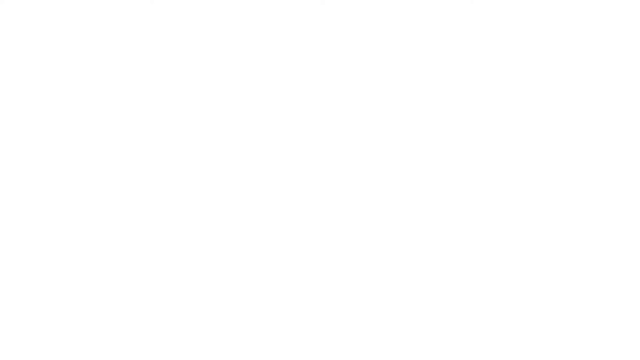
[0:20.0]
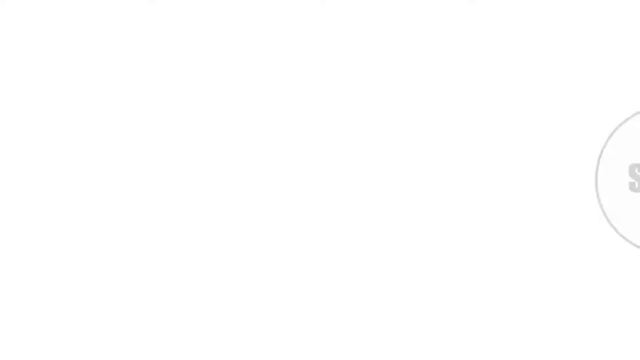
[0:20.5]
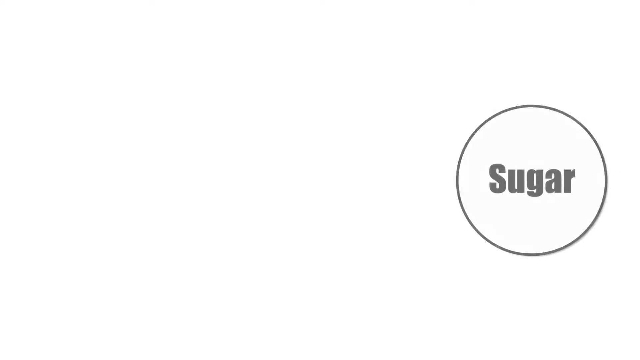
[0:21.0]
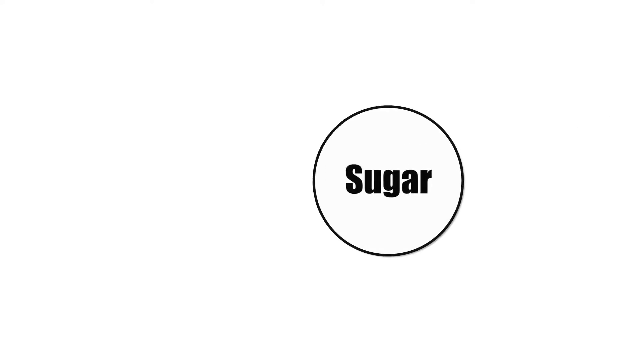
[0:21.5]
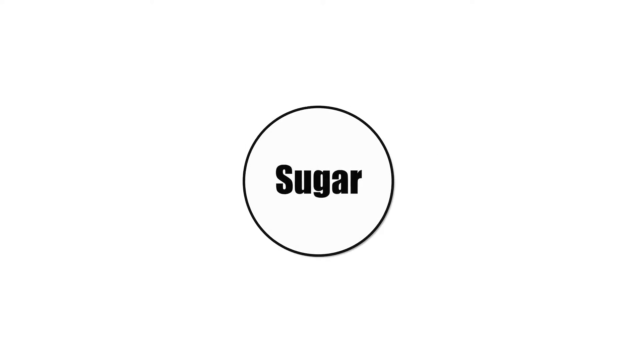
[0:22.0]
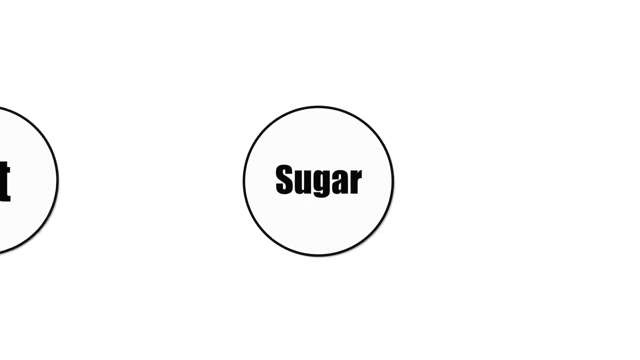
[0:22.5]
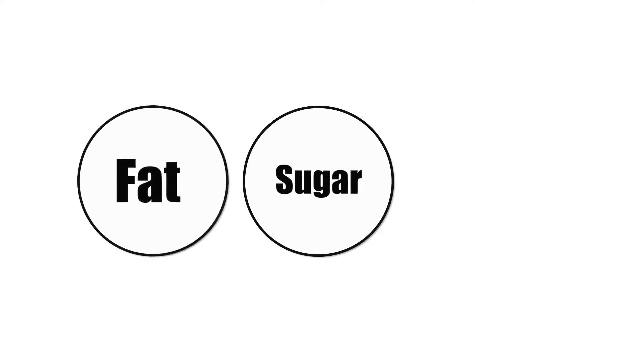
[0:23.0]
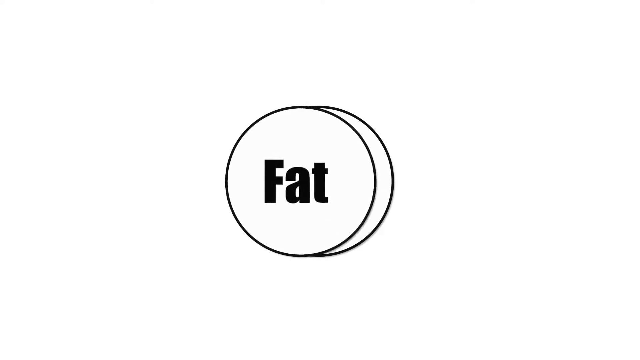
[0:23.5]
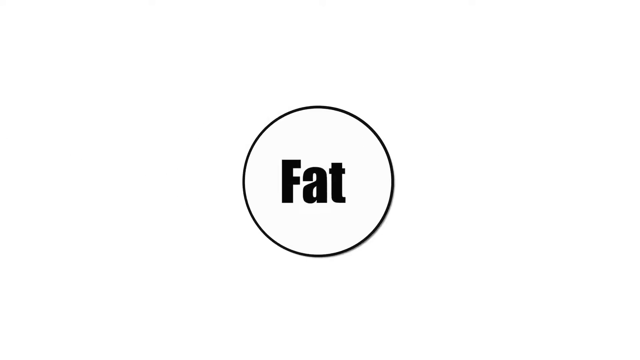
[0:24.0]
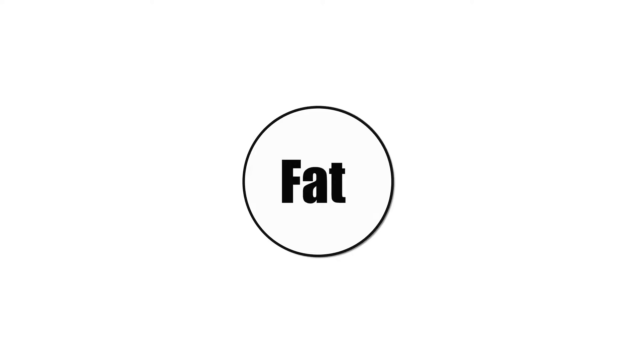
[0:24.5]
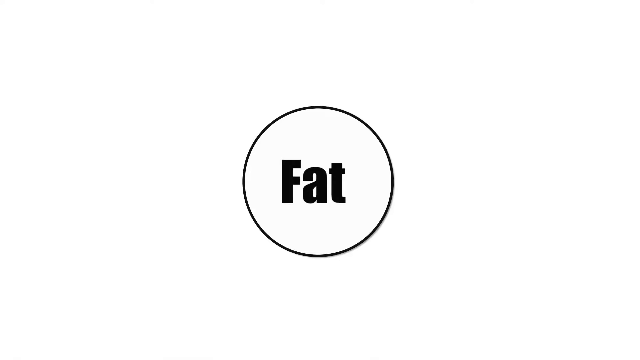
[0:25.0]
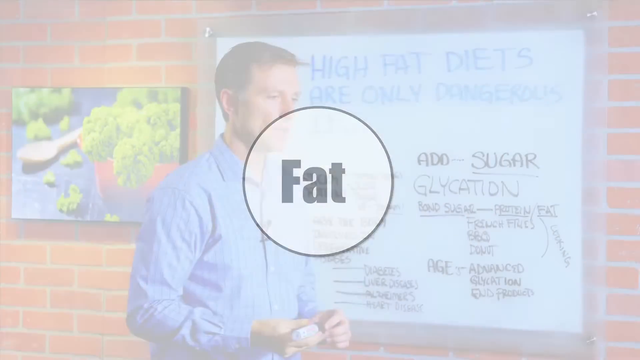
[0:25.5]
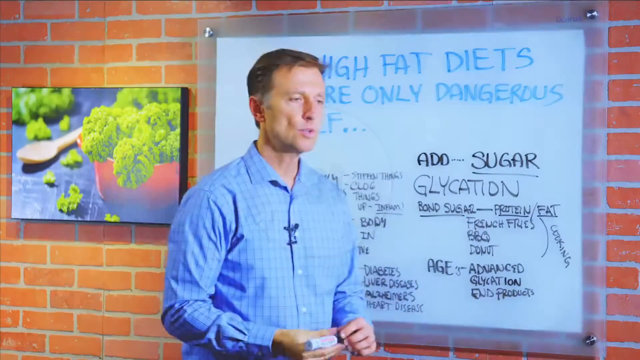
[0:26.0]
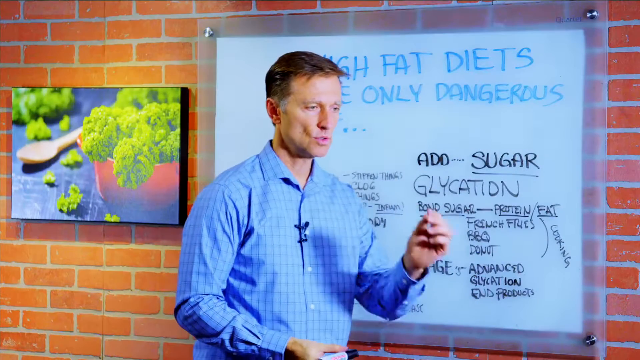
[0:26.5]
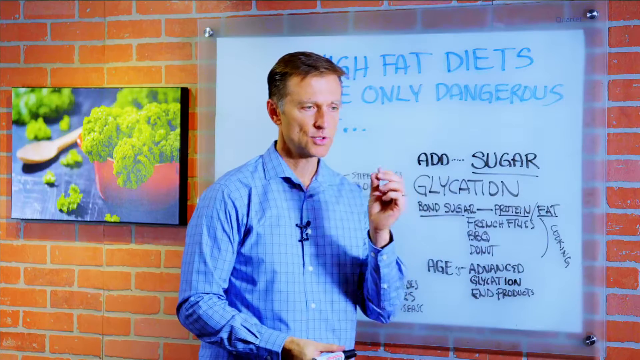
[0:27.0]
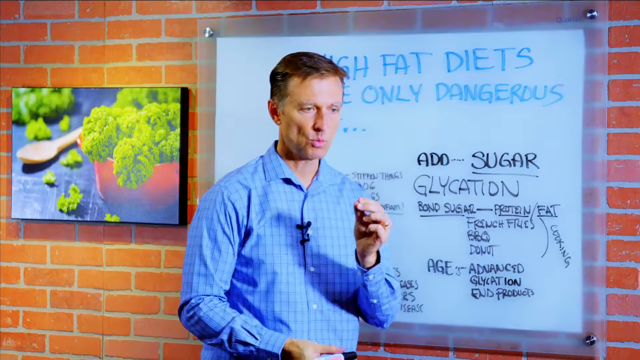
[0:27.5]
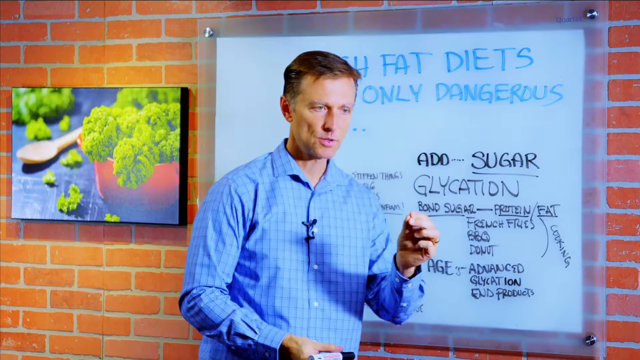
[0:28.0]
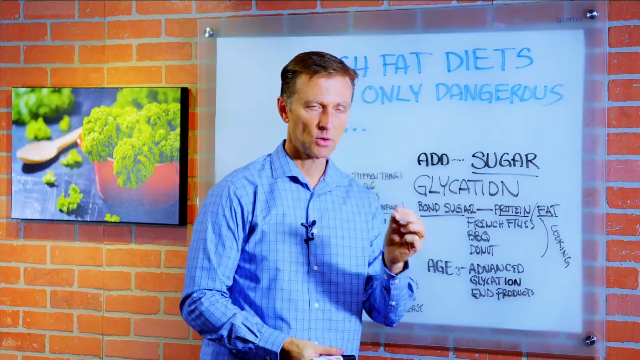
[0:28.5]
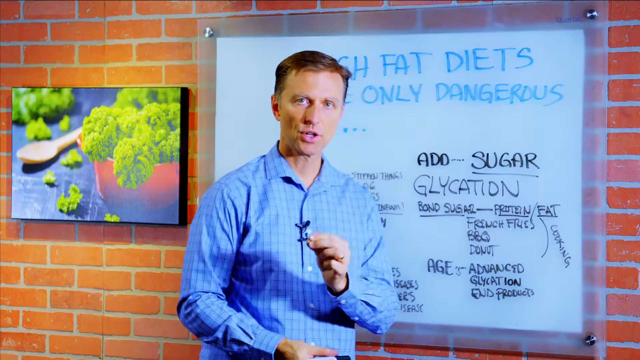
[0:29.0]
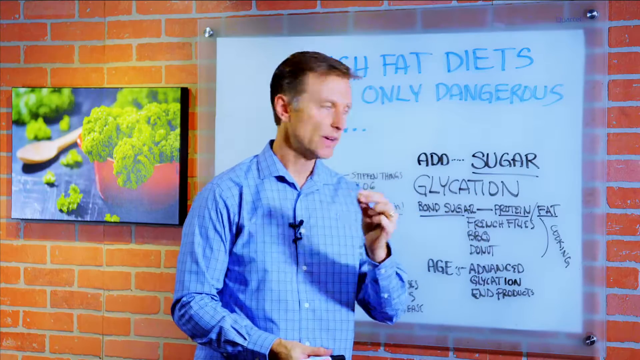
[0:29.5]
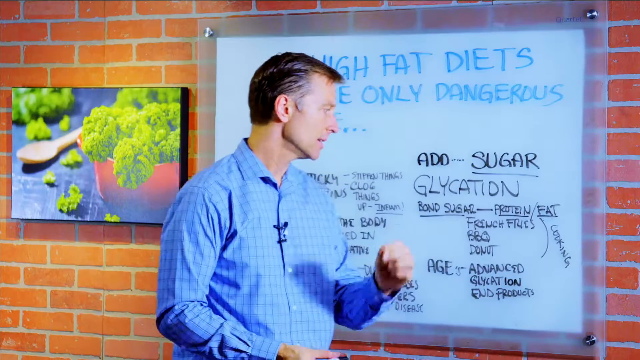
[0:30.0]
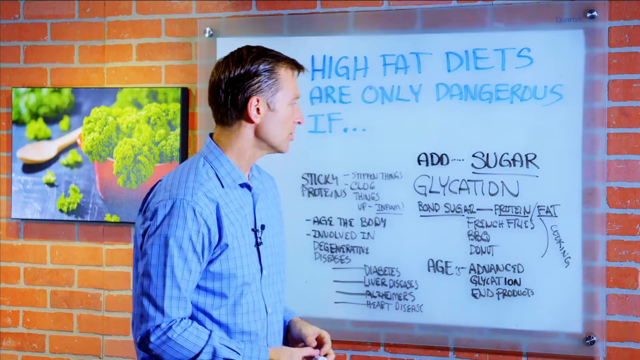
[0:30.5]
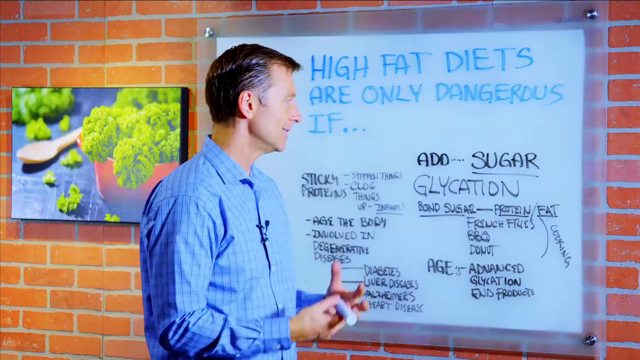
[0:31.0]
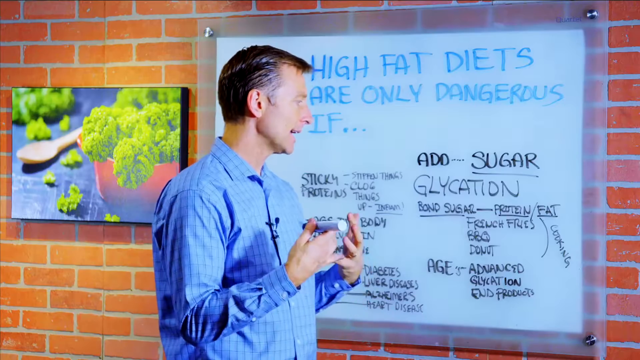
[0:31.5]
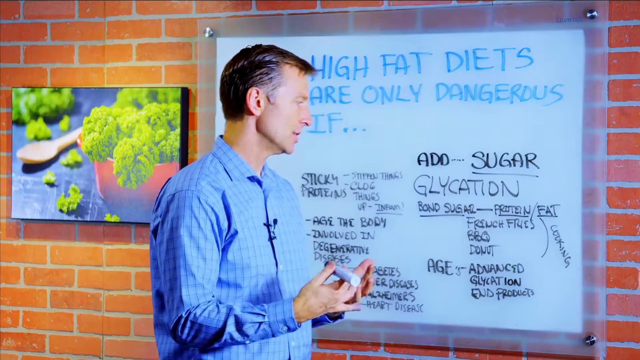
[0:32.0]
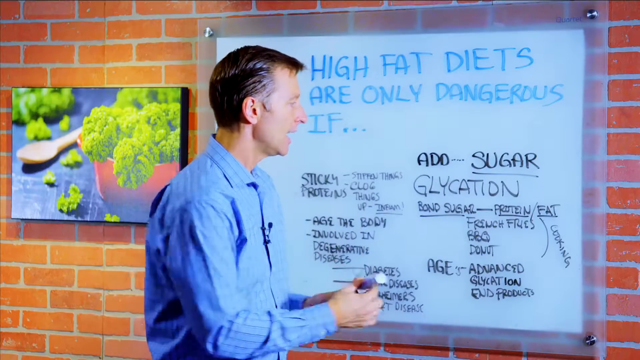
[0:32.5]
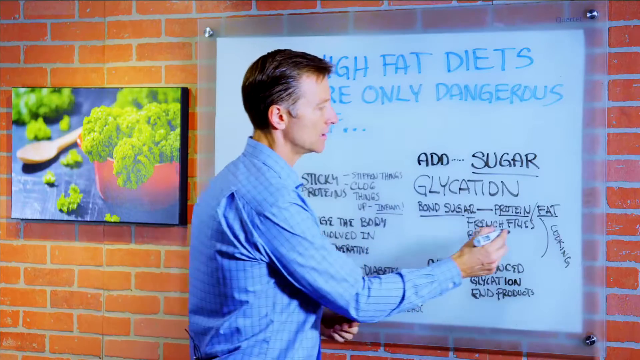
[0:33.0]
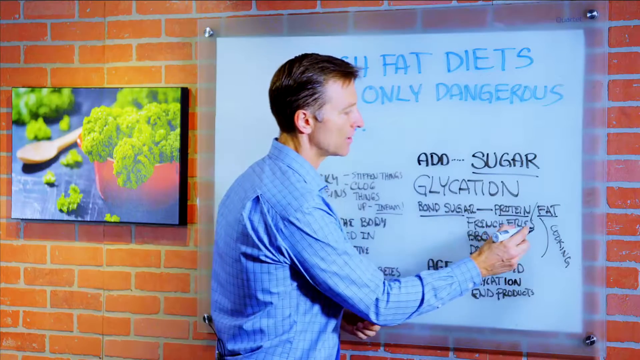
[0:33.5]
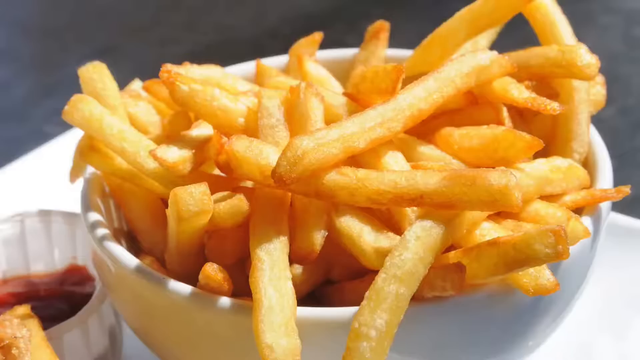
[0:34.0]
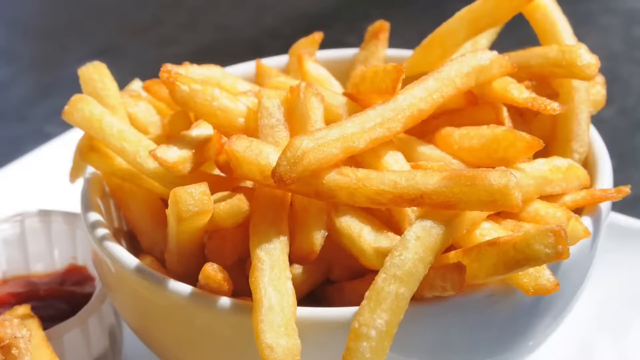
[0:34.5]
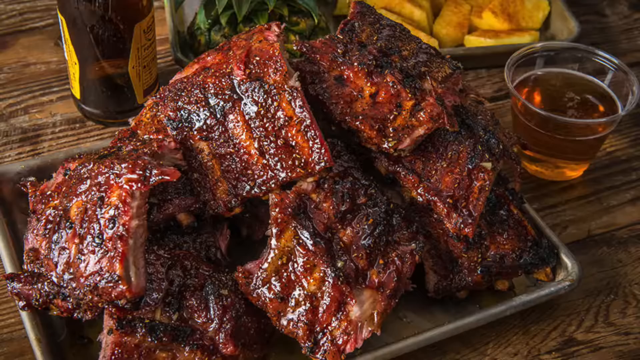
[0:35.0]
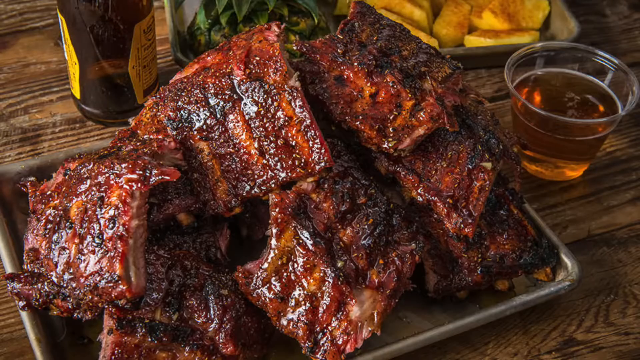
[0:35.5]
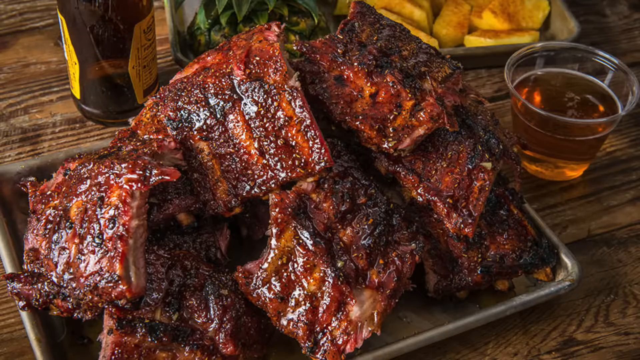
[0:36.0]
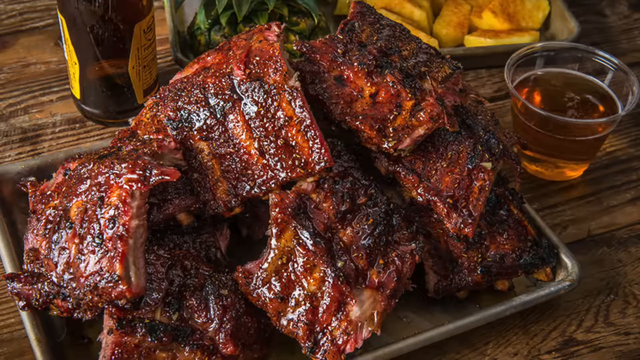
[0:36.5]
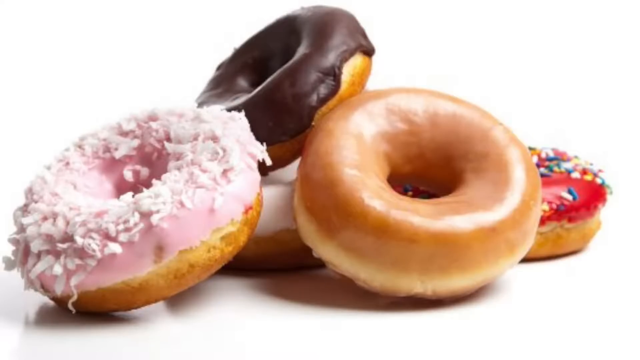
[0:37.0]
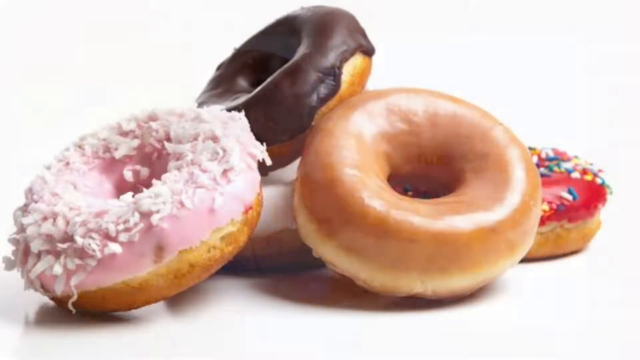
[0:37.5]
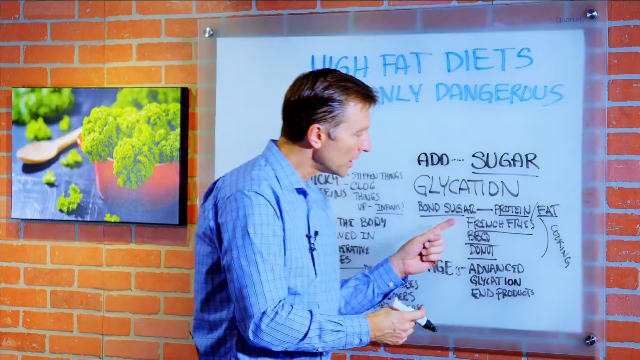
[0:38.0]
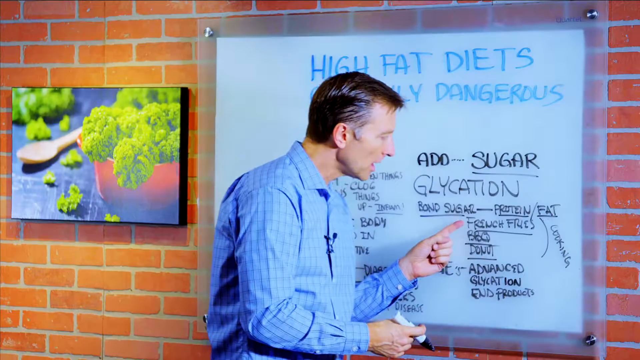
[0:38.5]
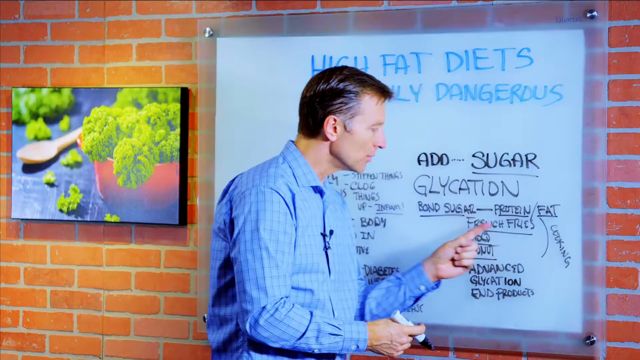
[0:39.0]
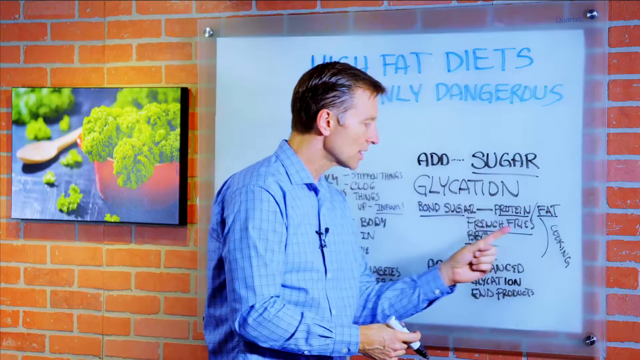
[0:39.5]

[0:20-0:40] Apparently meat, bread and many other foods are shown together.